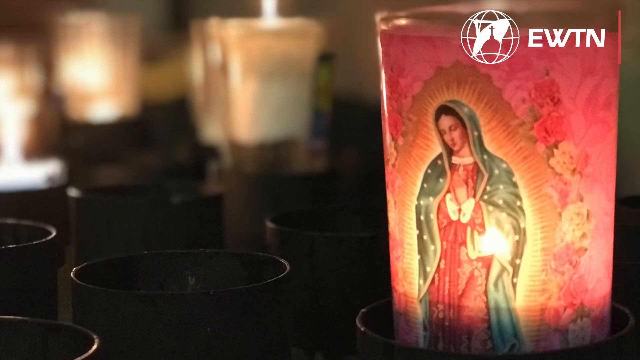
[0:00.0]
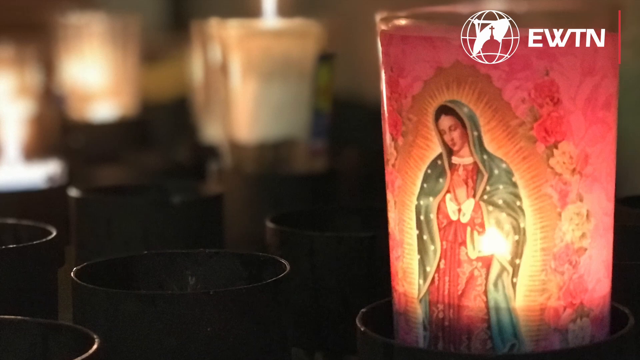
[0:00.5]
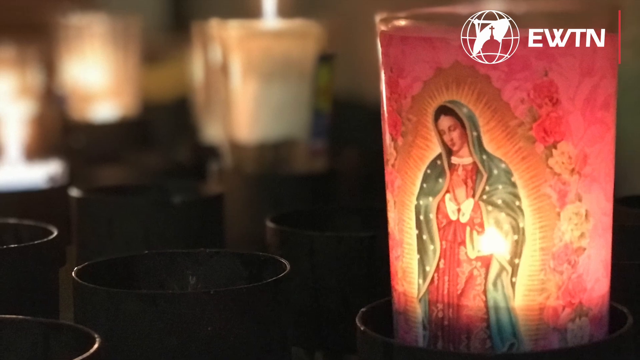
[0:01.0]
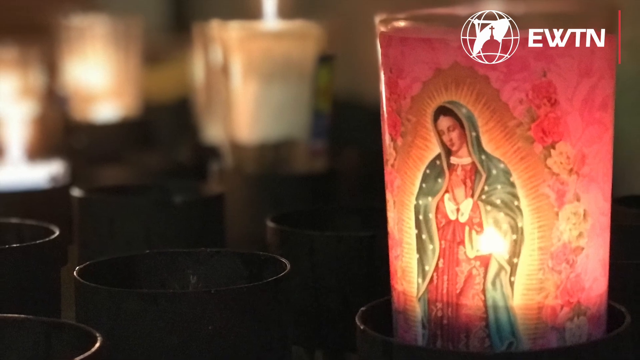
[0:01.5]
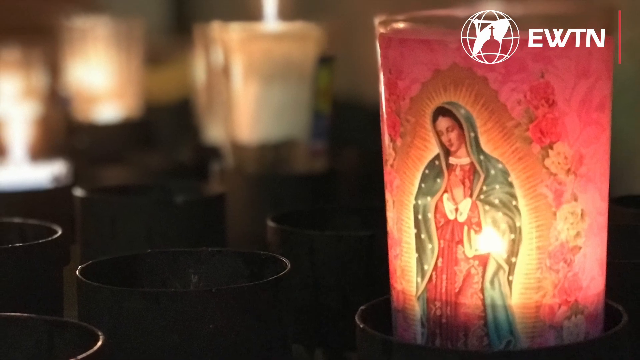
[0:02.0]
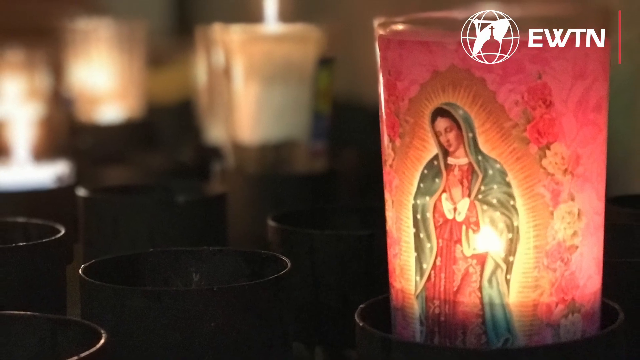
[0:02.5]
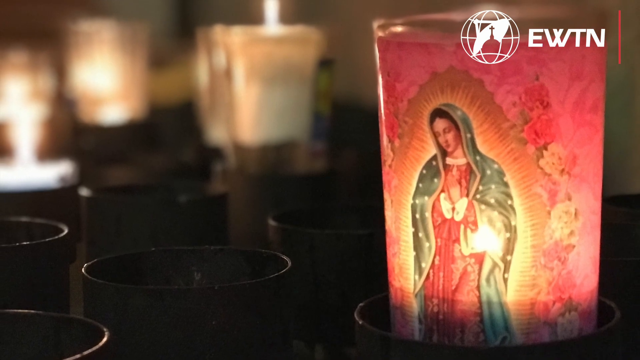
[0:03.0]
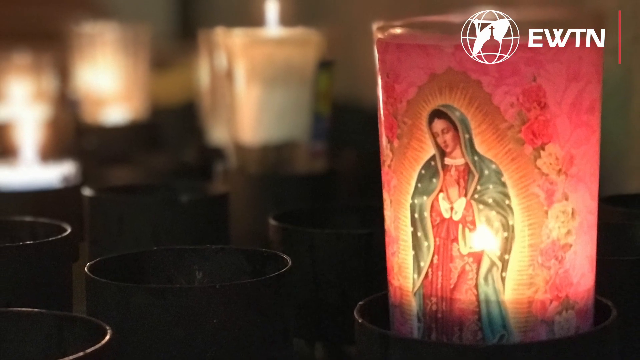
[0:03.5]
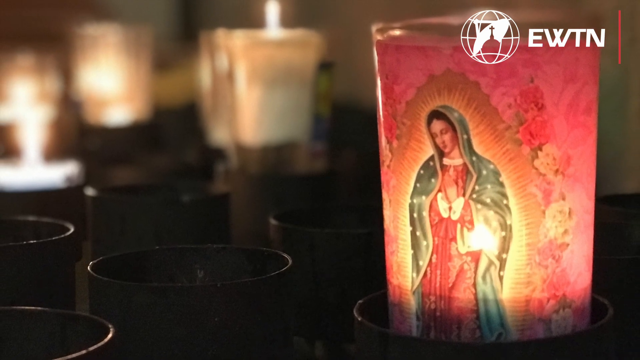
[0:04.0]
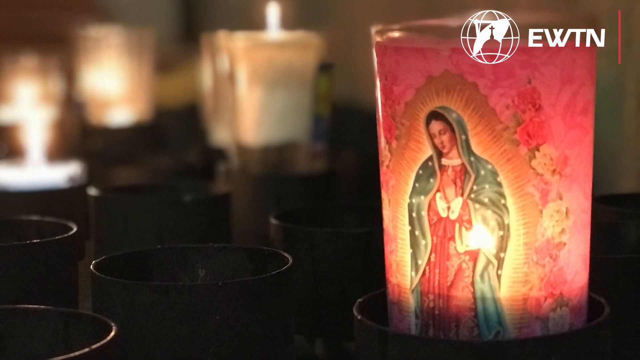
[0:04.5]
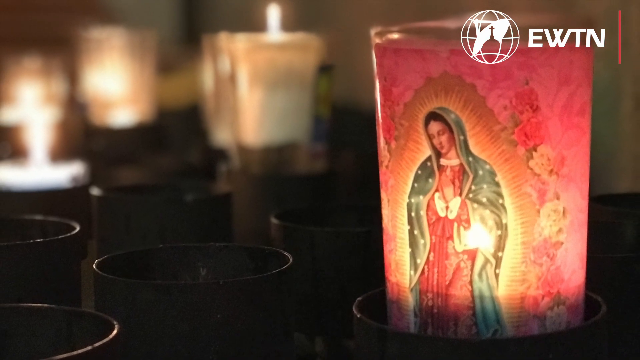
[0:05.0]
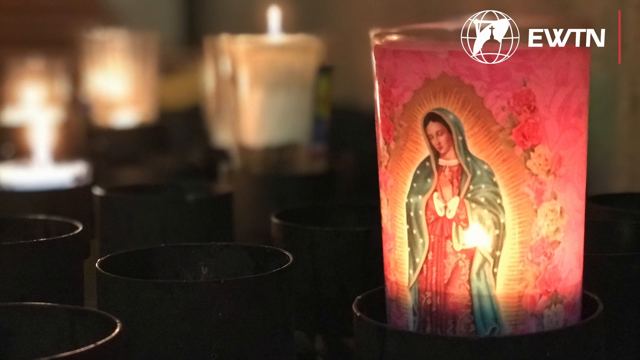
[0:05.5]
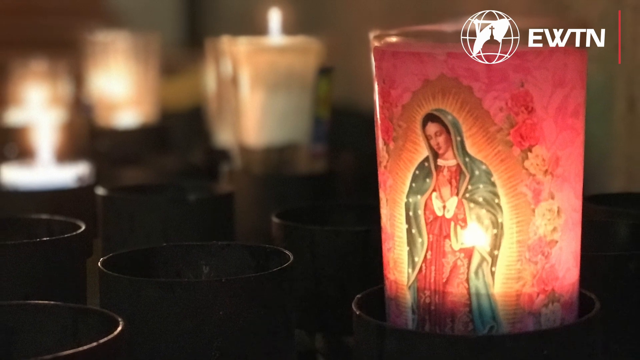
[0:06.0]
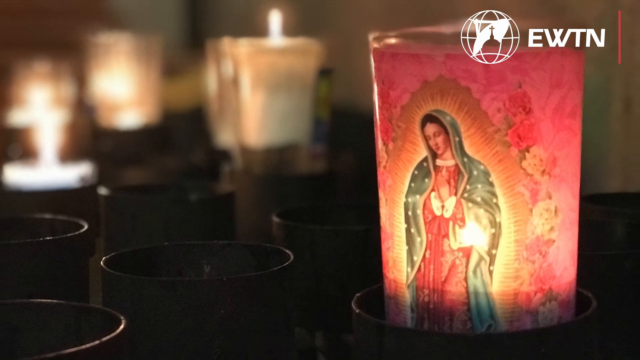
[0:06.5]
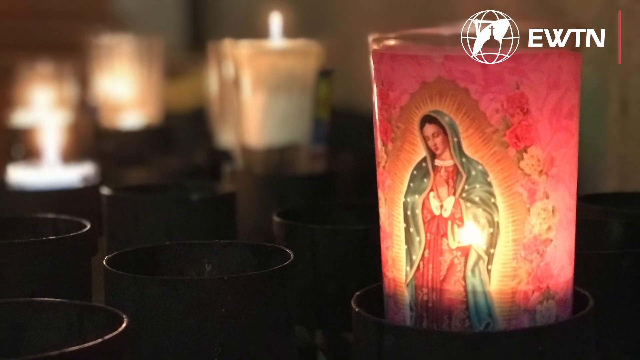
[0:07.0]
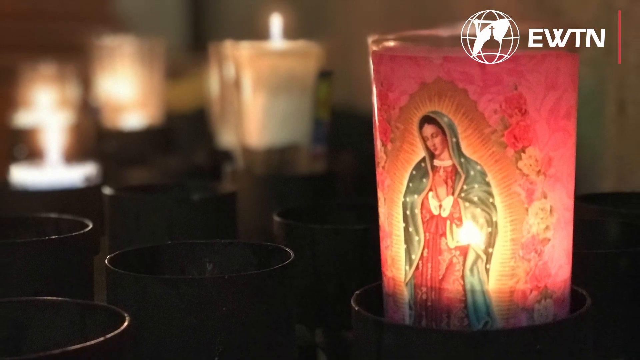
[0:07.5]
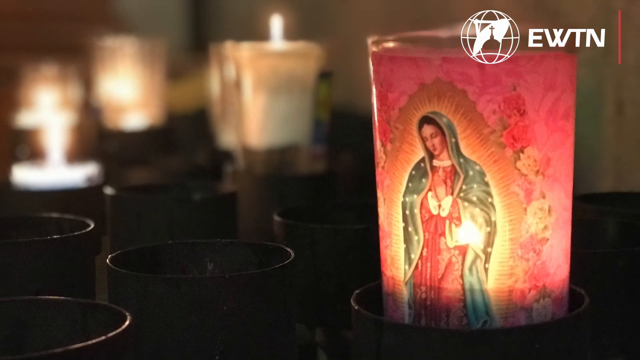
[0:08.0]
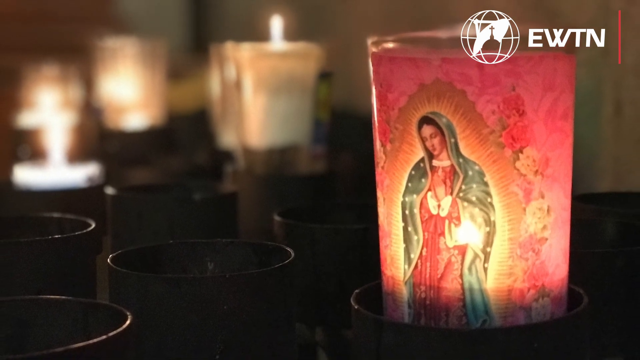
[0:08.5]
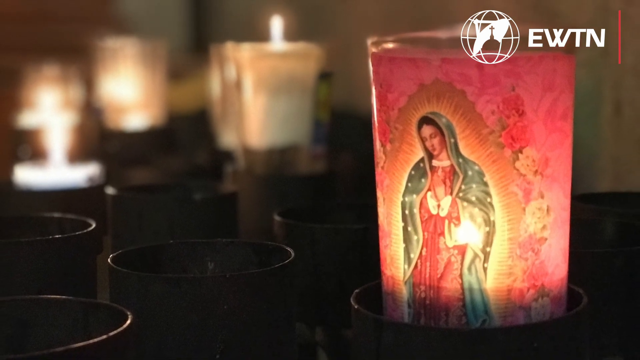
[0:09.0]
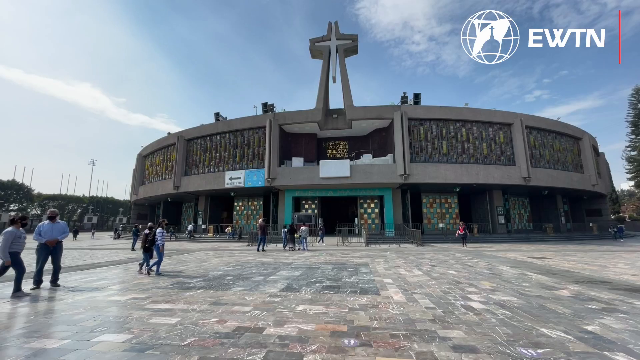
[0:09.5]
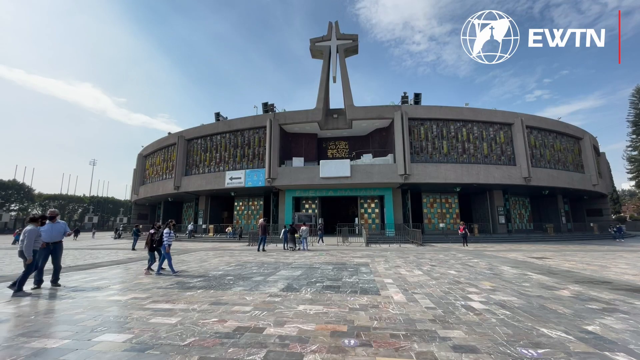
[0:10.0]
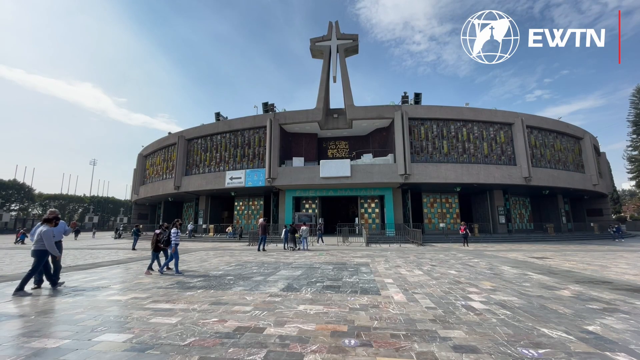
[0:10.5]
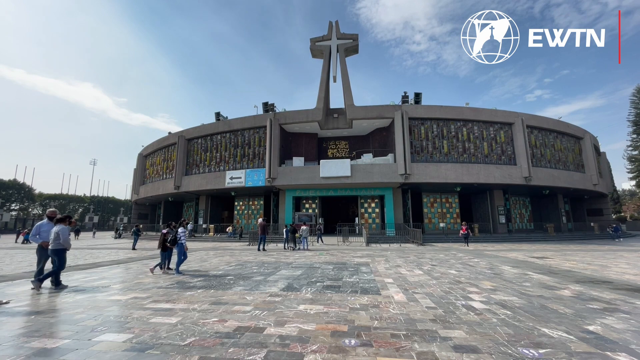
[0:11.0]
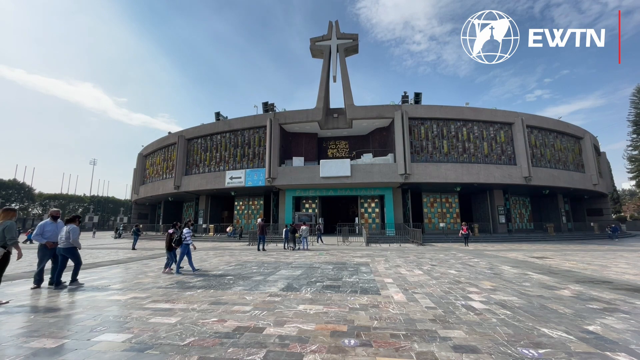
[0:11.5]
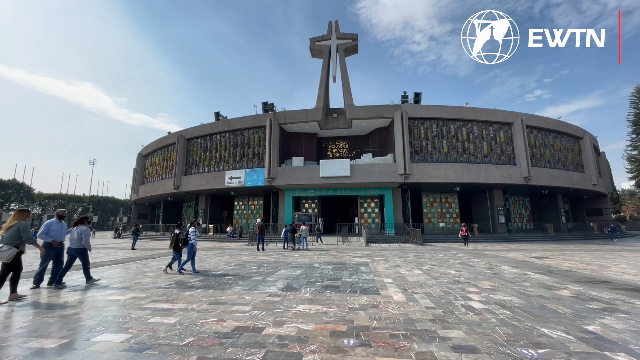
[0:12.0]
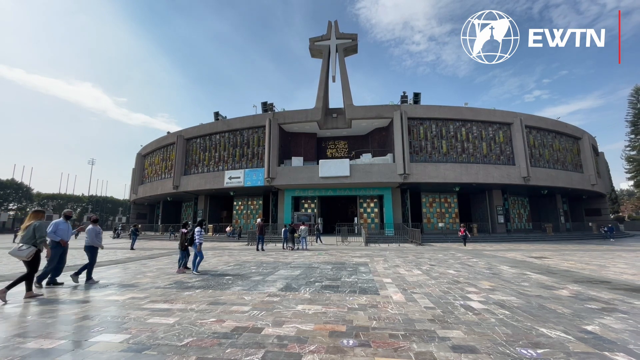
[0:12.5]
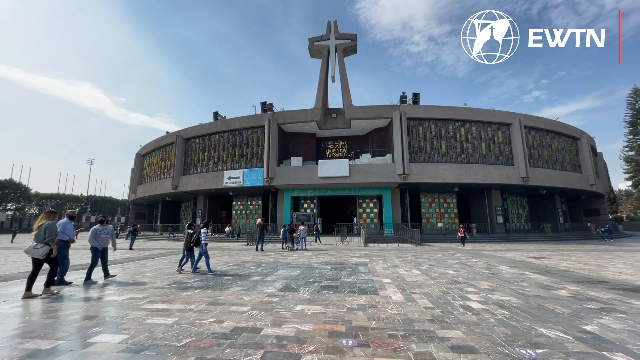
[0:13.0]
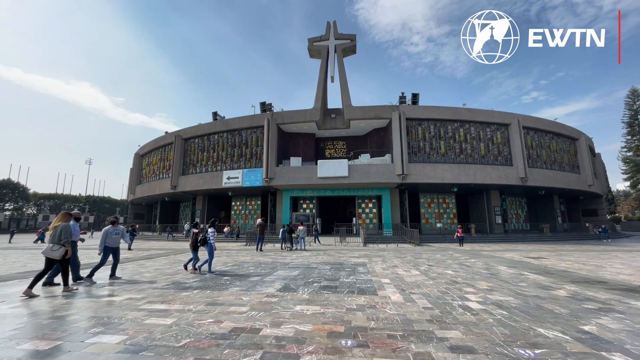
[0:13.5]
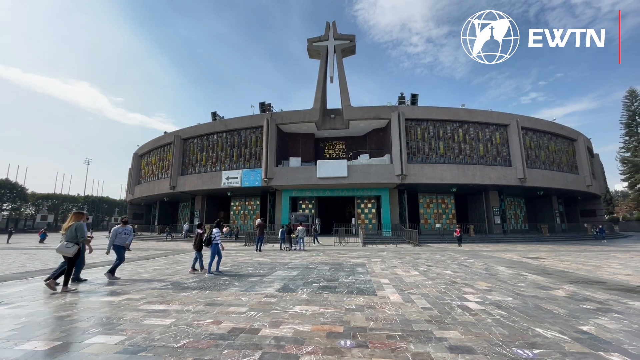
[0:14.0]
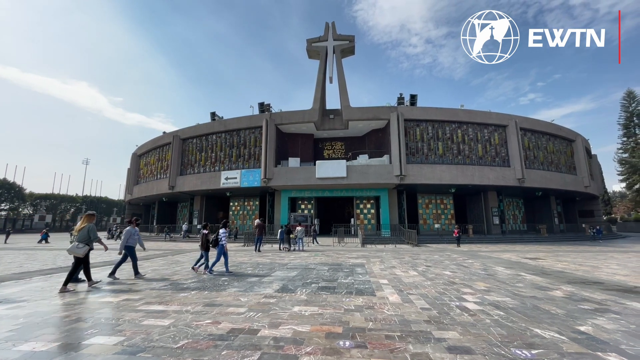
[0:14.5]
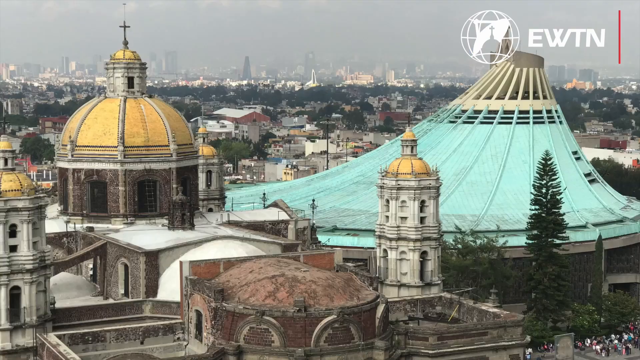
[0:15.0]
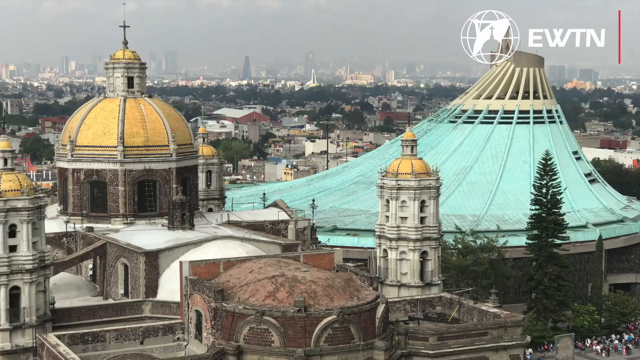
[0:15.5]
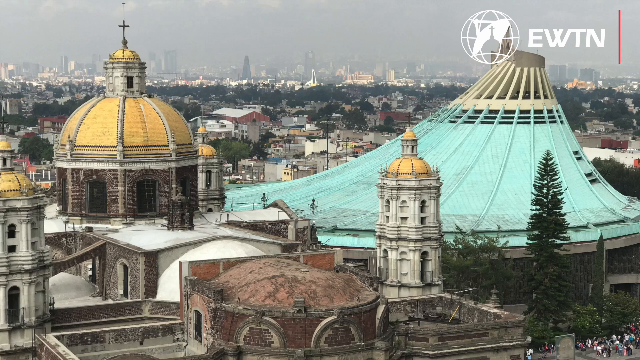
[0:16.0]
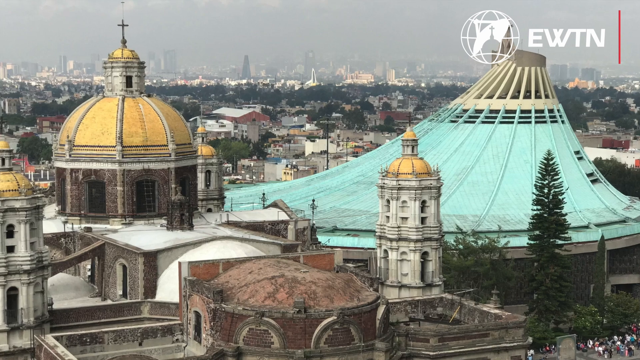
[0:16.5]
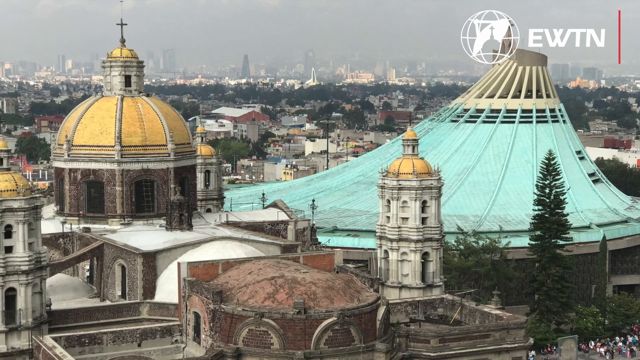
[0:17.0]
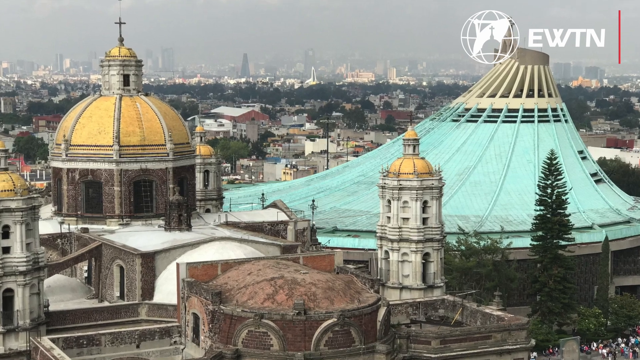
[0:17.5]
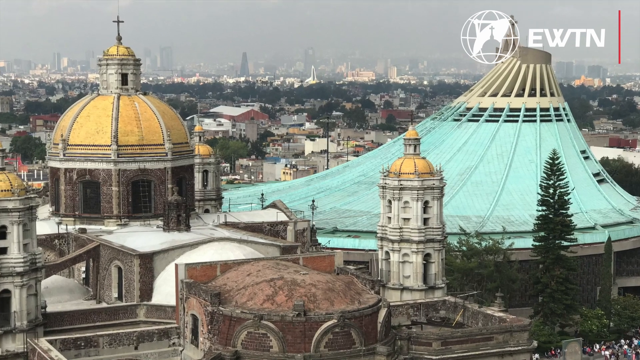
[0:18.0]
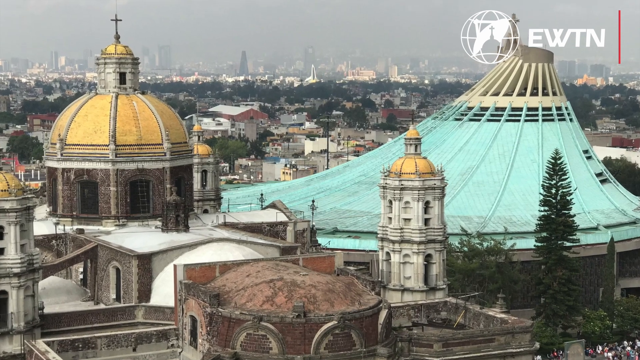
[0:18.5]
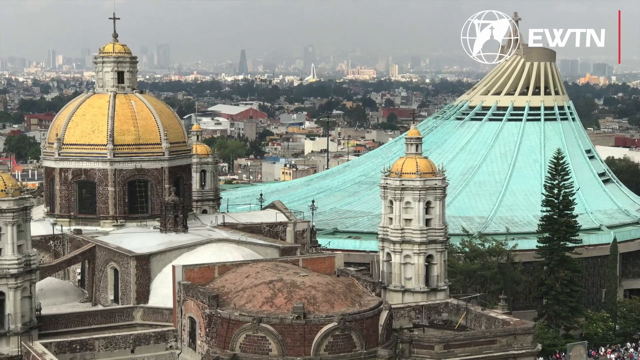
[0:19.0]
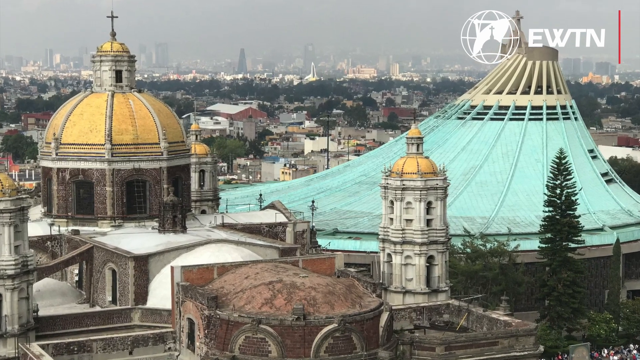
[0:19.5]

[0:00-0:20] A logo icon in the top right says "EWTN", and there is an icon of some type of globe and a cross on top of a building. The shot is zoomed in on a candle with pink glass. In its center is what appears to be a version of Mother Mary, praying with her hands clasped, eyes closed and head tilted somewhat to the side. Her head is covered with a scarf, and the way the candle is lit kind of brightens the center of the figure. The video pans out to show some additional candles in the foreground, then moves to a daylight scene where several people are walking in front of a church. The camera then pans to another scene showing the top of the church with the city in the foreground. The top of the church looks very similar, if not the same, as the church shape in the icon at the top right. The top is gold and is supported by stone. There also appears to be another, light green structure to the right.